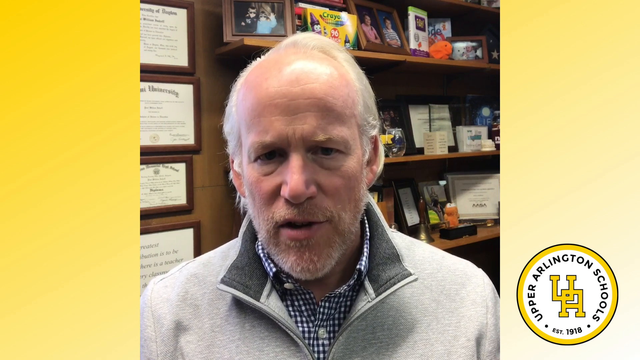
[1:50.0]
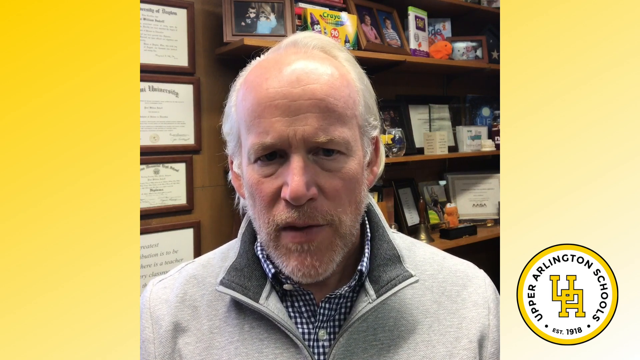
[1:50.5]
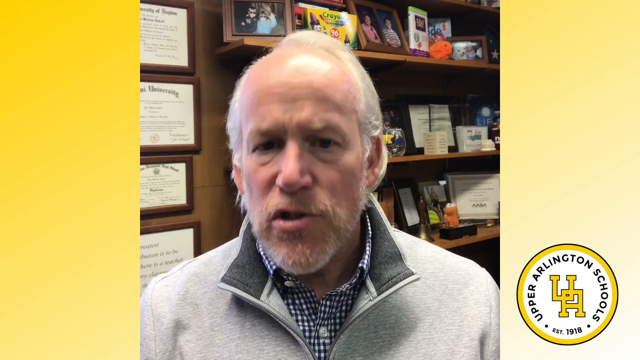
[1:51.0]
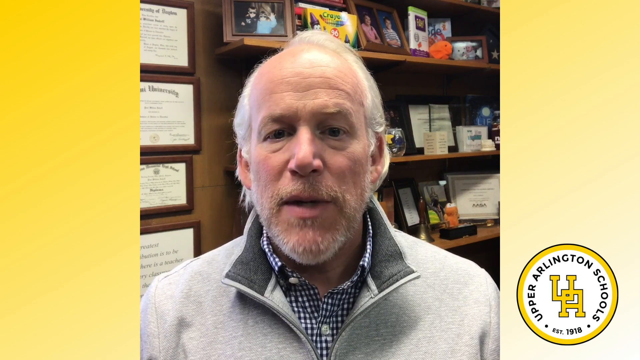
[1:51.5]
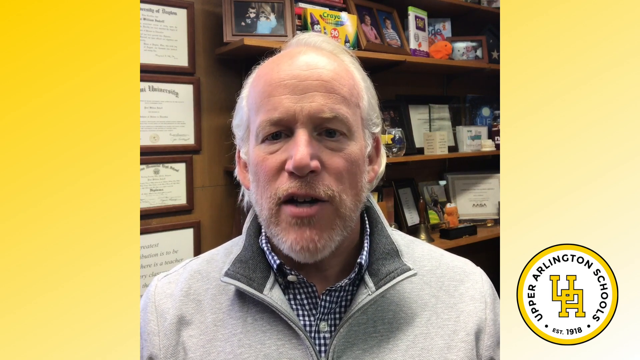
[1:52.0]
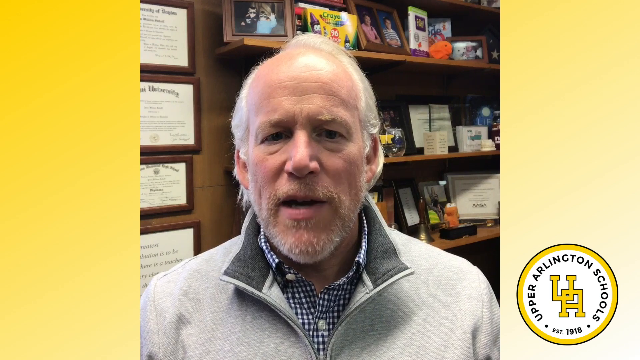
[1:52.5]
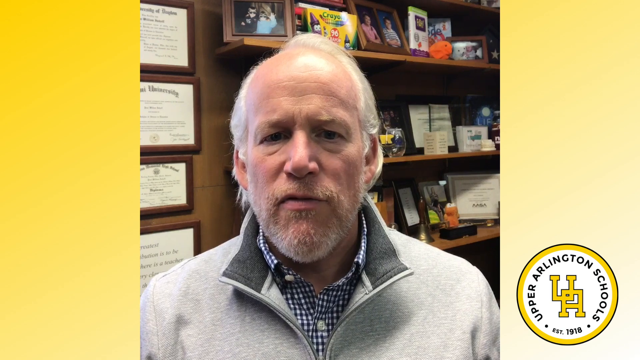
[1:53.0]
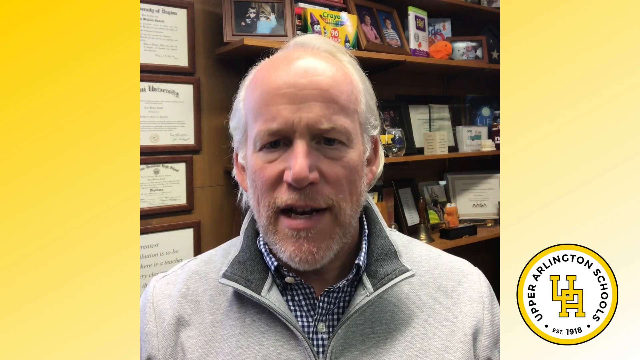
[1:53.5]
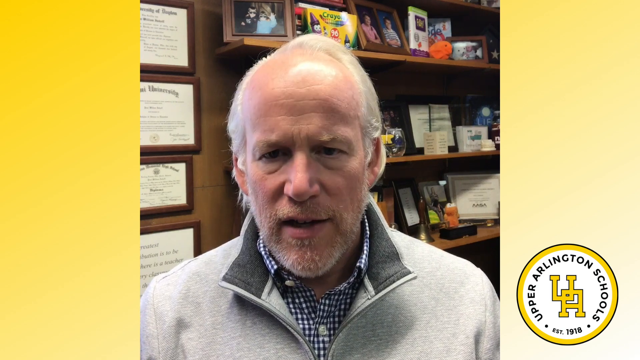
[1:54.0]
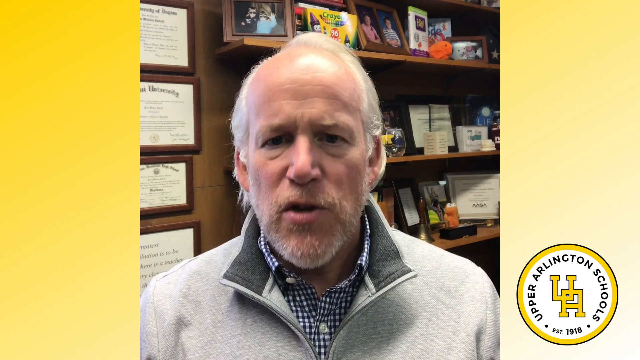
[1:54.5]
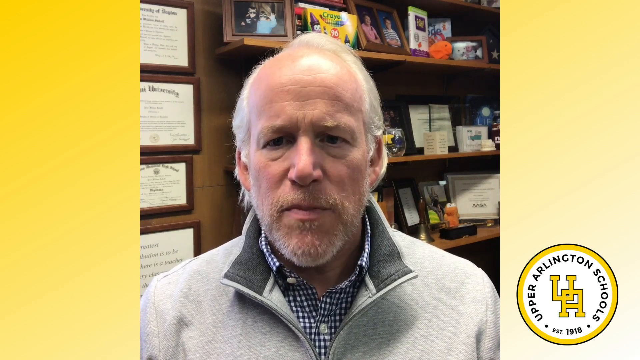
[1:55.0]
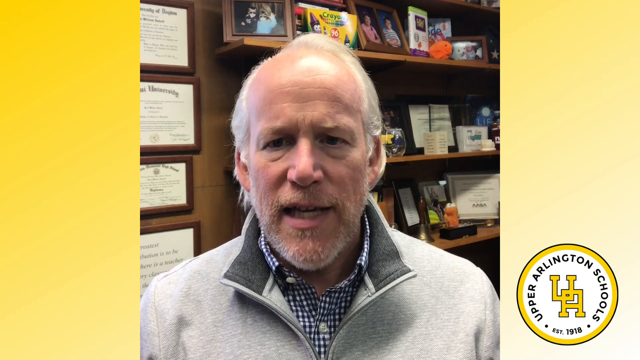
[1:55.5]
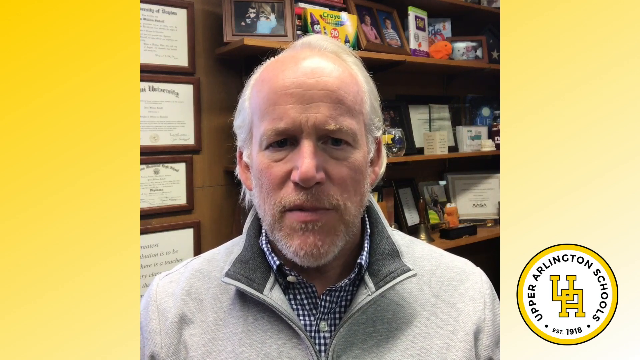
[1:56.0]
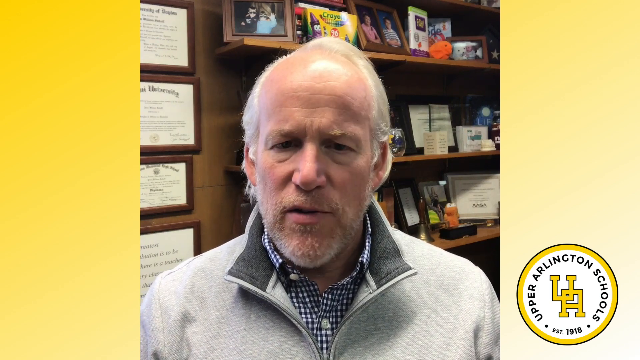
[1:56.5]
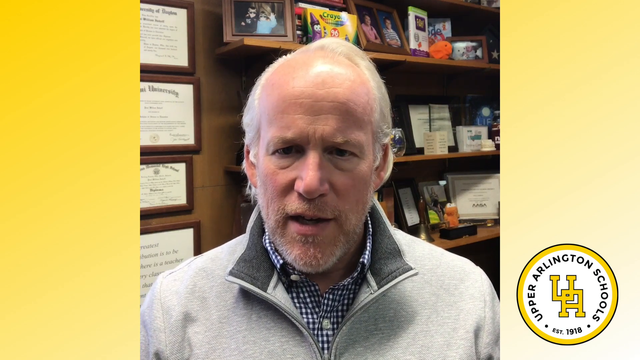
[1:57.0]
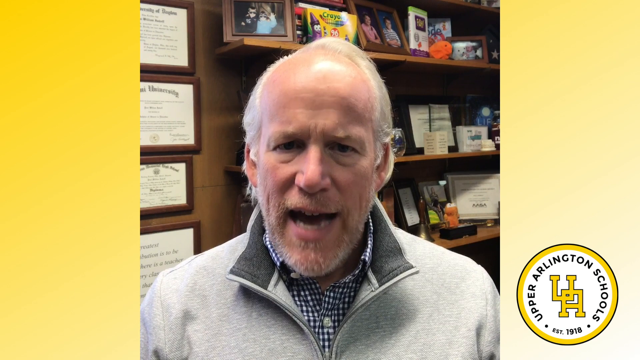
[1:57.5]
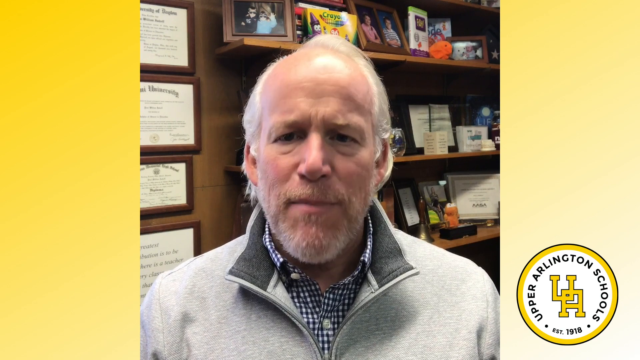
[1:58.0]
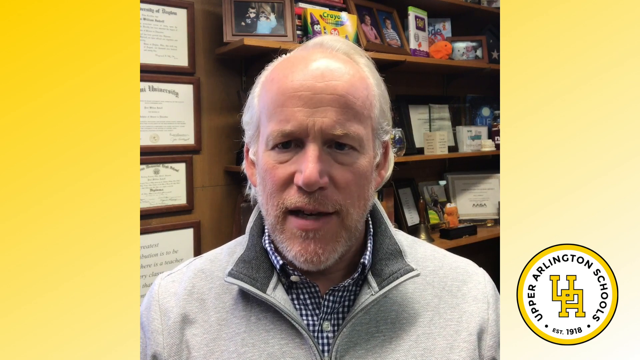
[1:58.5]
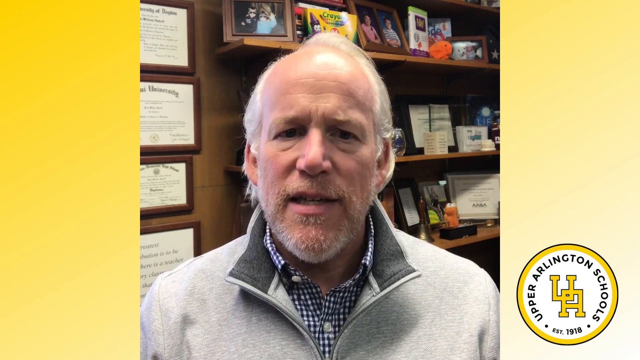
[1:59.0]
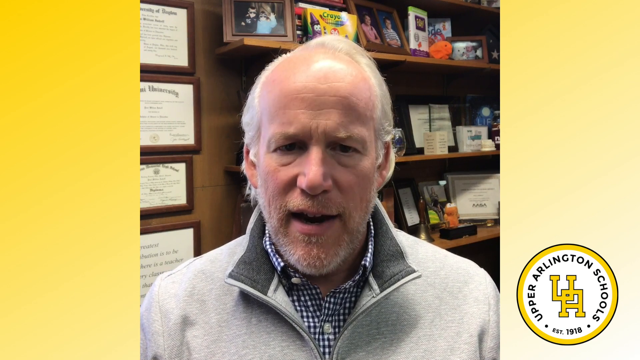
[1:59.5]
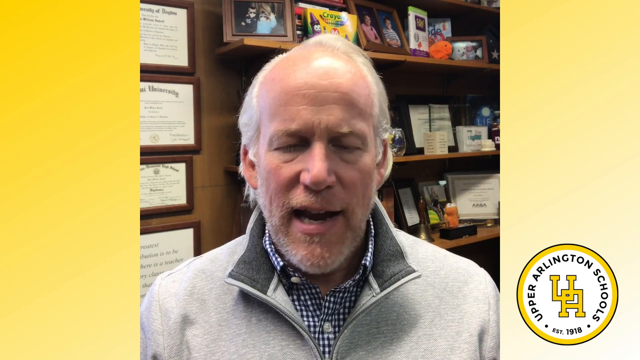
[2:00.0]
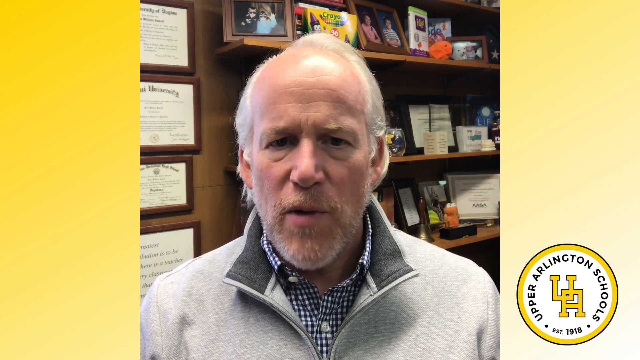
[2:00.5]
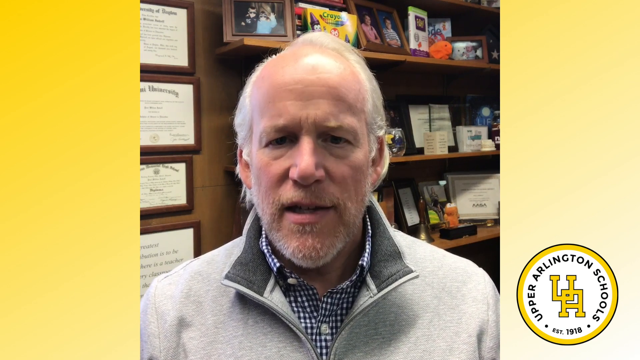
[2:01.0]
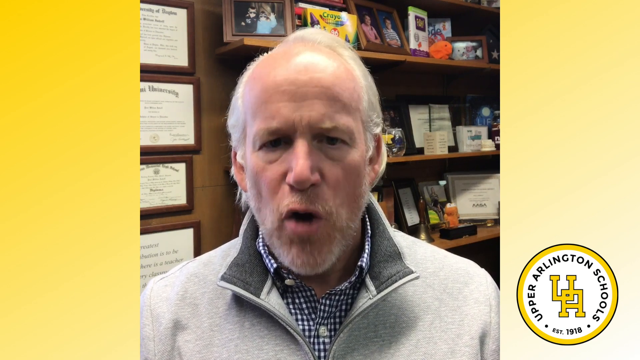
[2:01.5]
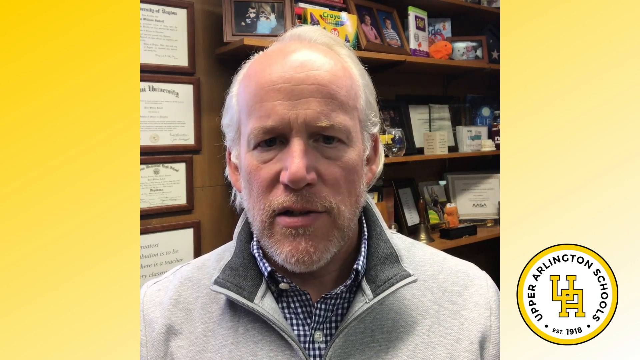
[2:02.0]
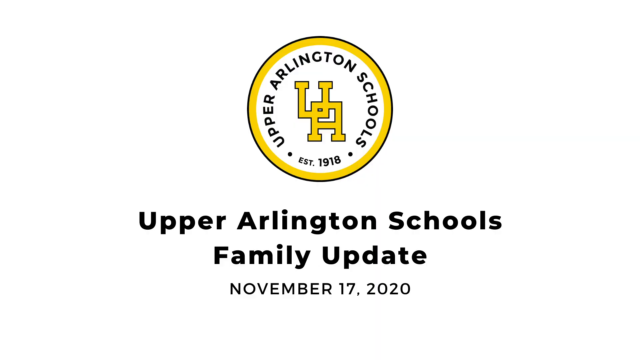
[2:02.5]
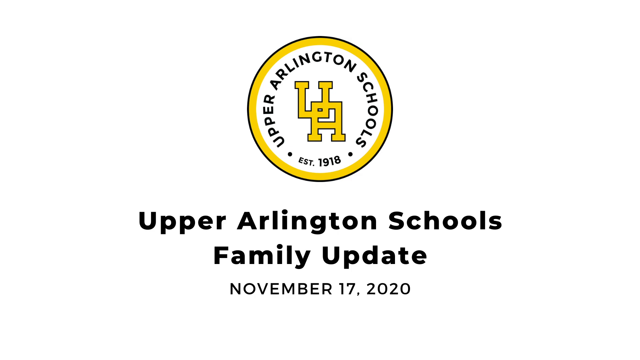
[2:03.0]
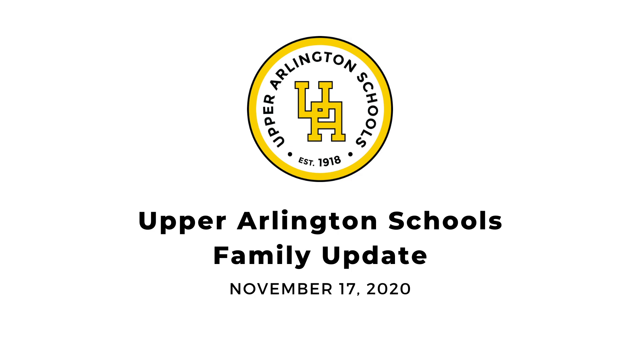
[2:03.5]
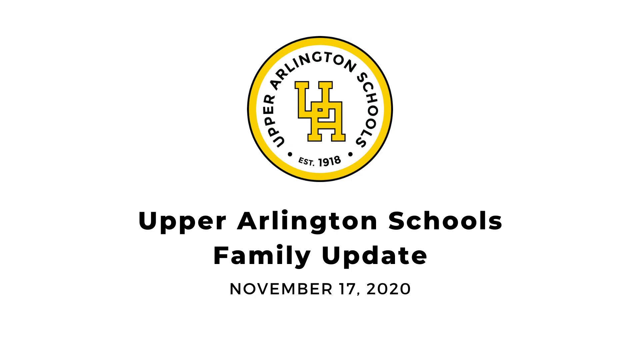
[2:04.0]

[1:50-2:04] The man talks to the camera, wearing a gray, blue and white checkered shirt. Behind him is a shelf with many pictures and awards, and to the left of the shelf are what look like his educational diplomas and awards. In the corner is the Upper Arlington emblem, a circle with a black outline and a thicker yellow outline, containing "Upper Arlington Schools EST 1918" with a yellow U and A. The video then ends on the Upper Arlington emblem, with "Upper Arlington Schools family update" in bold black letters beneath it and "November 17, 2020" underneath that.